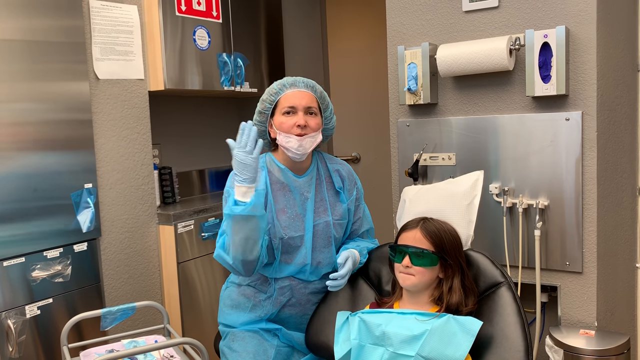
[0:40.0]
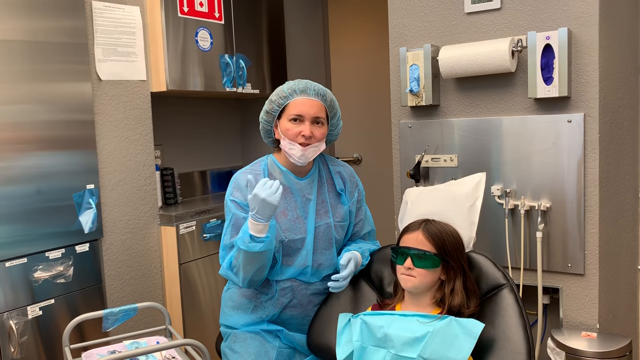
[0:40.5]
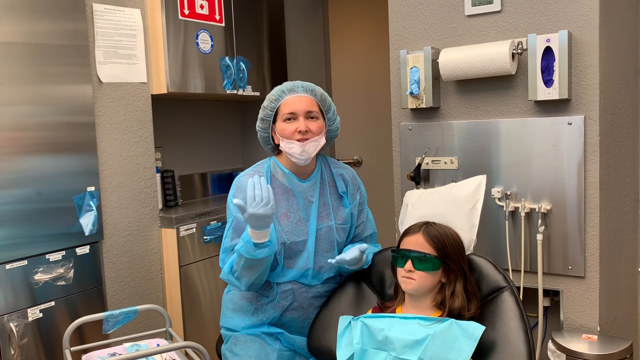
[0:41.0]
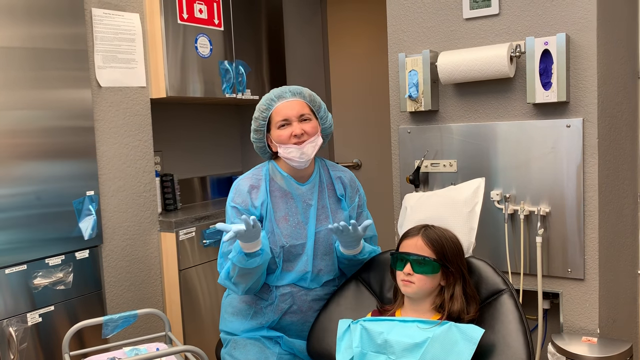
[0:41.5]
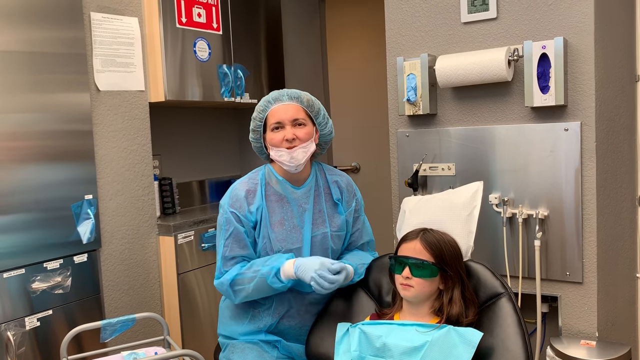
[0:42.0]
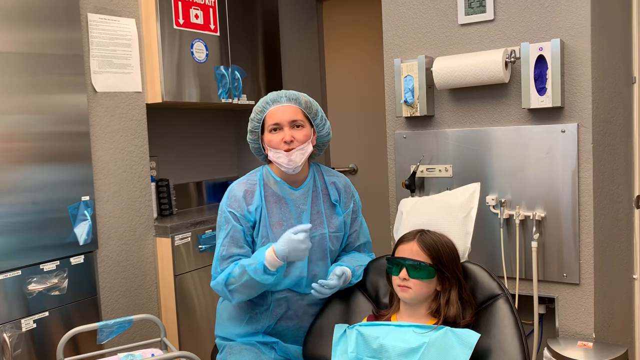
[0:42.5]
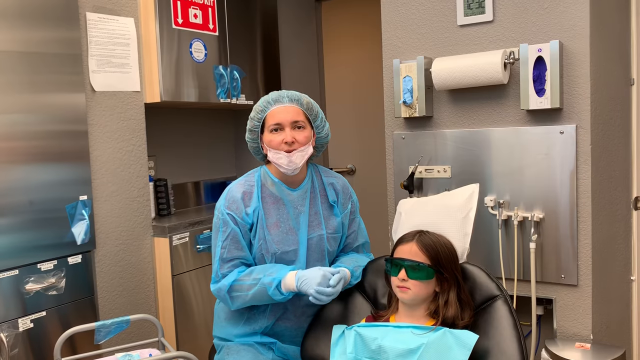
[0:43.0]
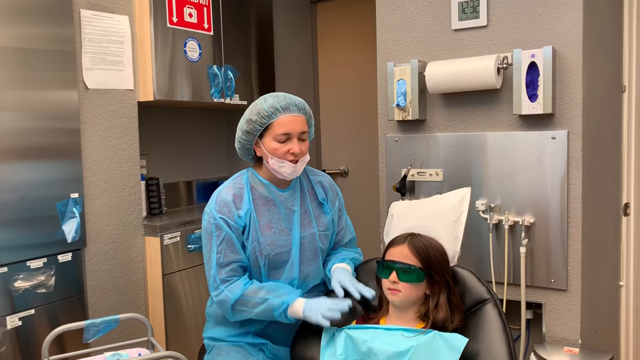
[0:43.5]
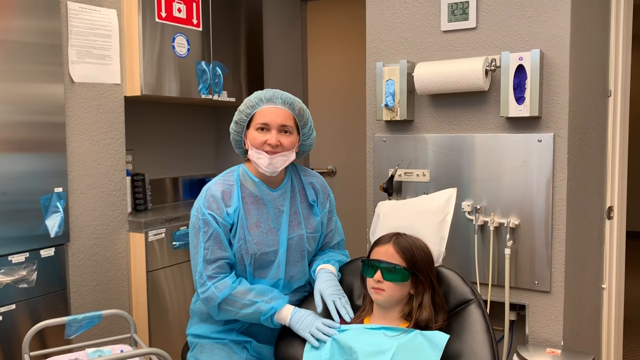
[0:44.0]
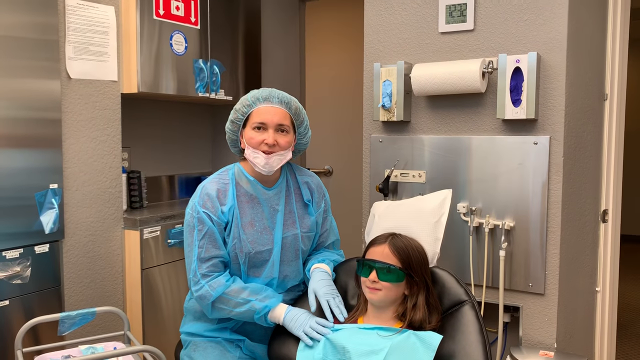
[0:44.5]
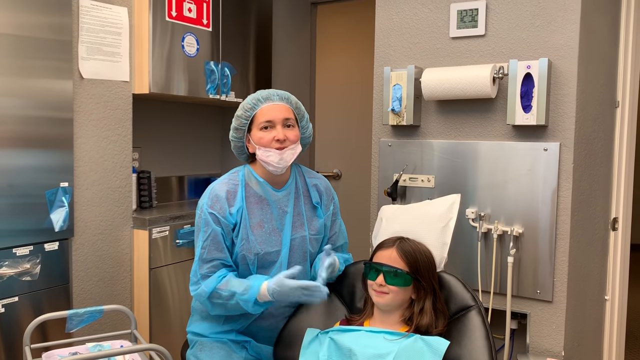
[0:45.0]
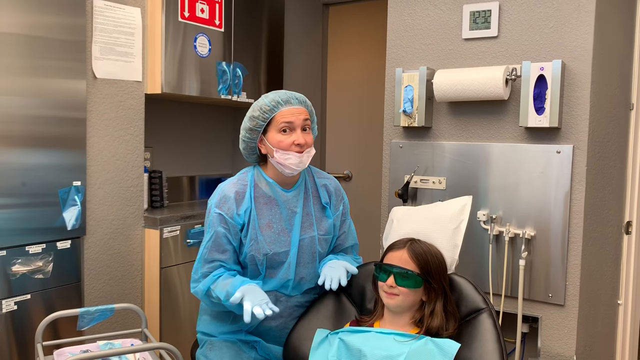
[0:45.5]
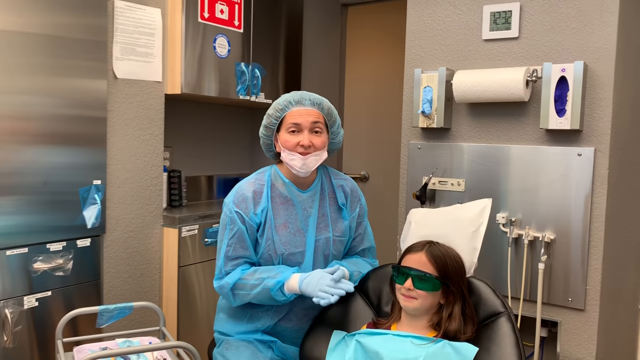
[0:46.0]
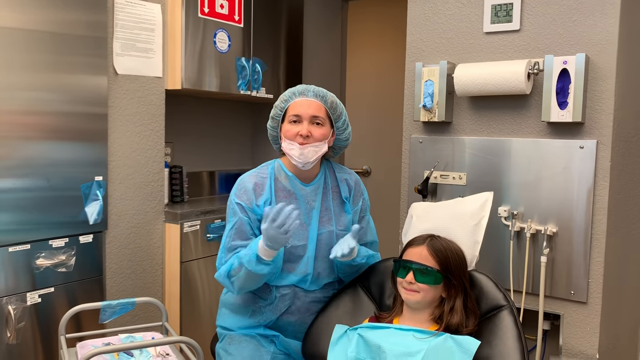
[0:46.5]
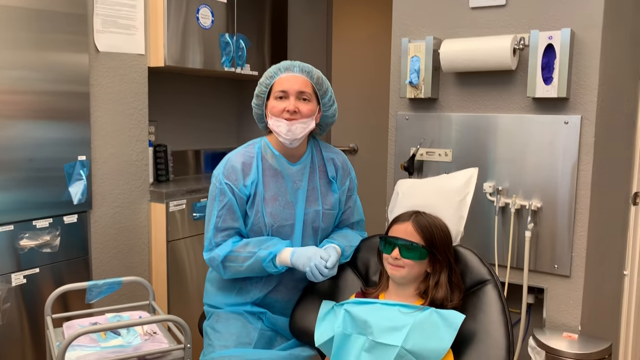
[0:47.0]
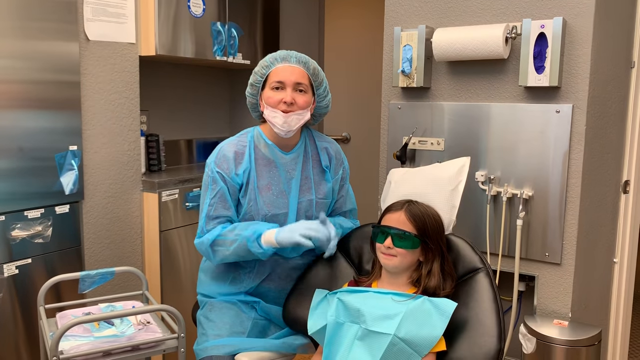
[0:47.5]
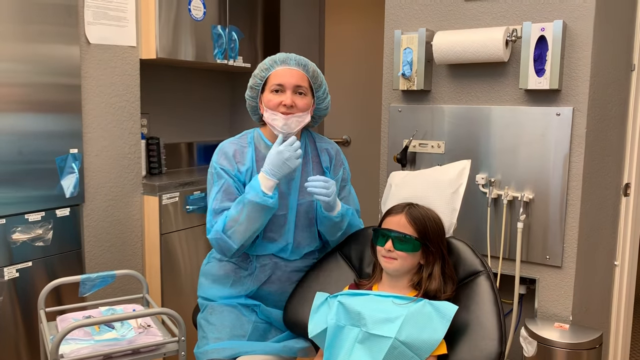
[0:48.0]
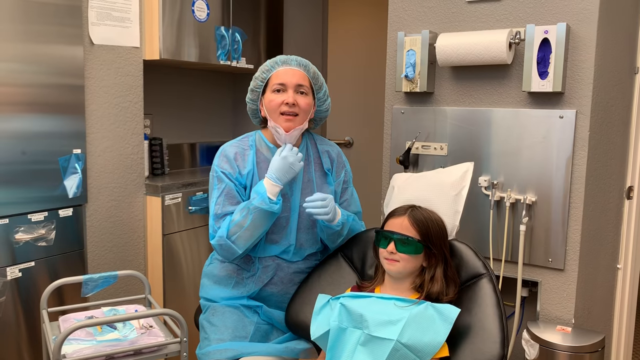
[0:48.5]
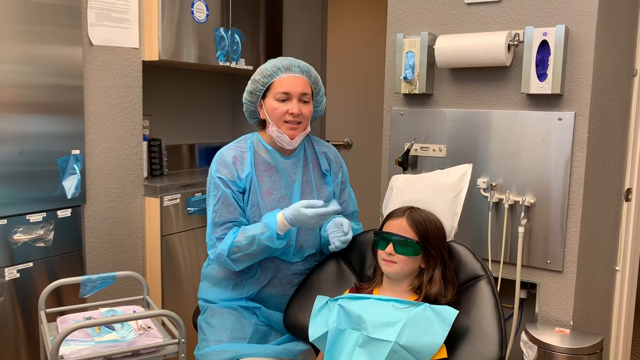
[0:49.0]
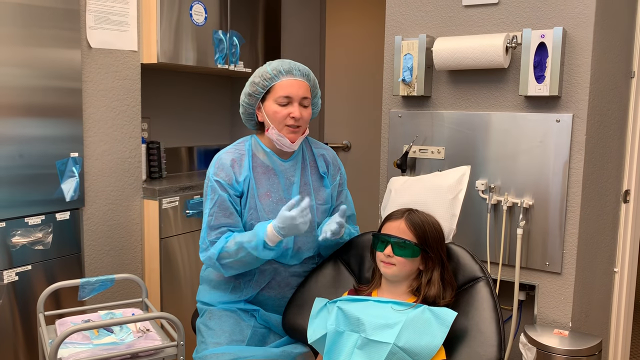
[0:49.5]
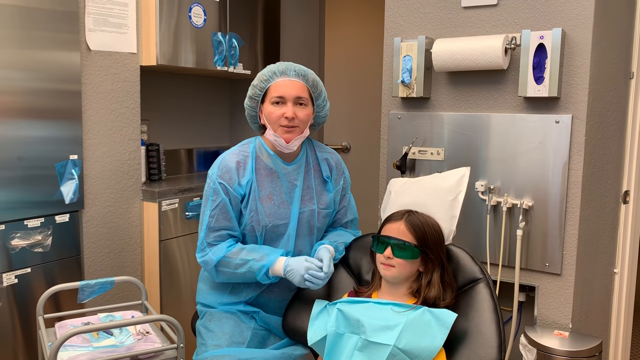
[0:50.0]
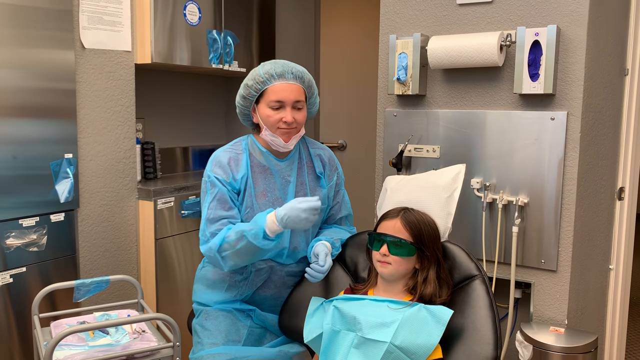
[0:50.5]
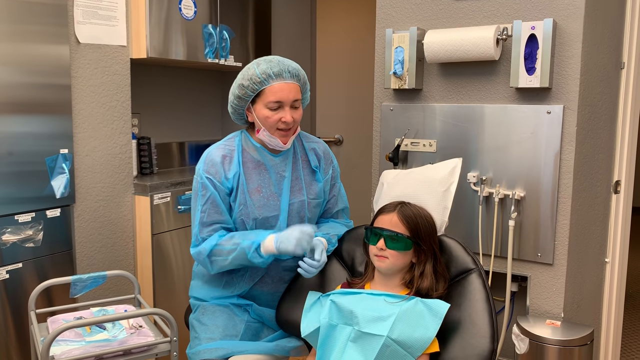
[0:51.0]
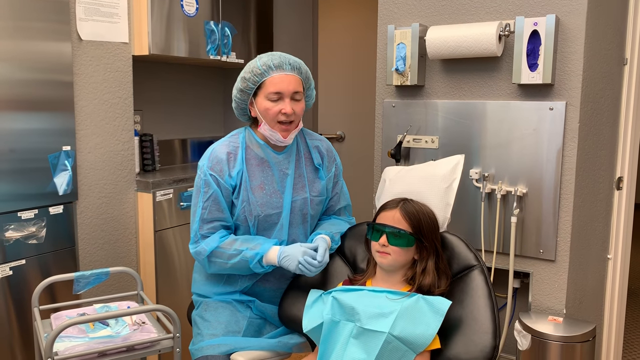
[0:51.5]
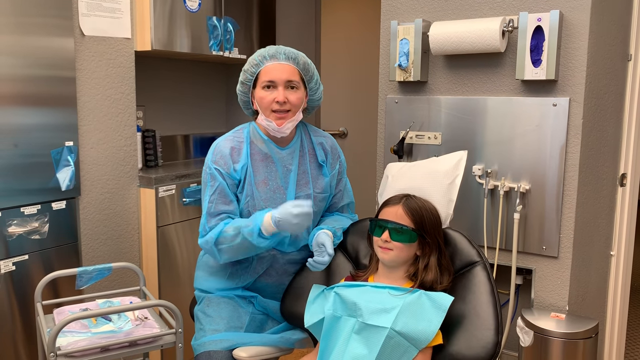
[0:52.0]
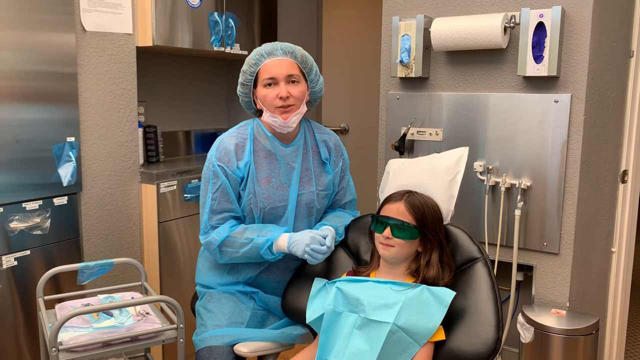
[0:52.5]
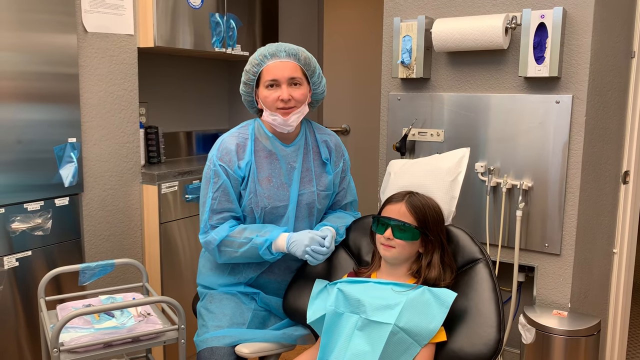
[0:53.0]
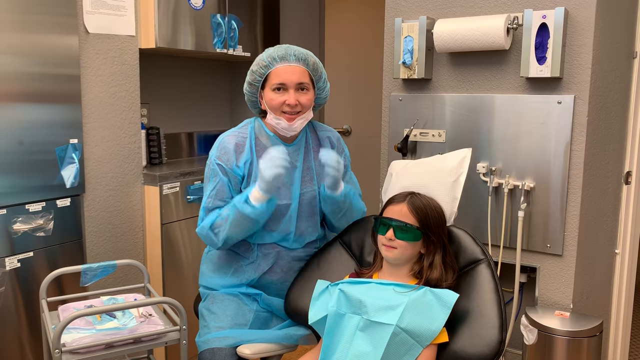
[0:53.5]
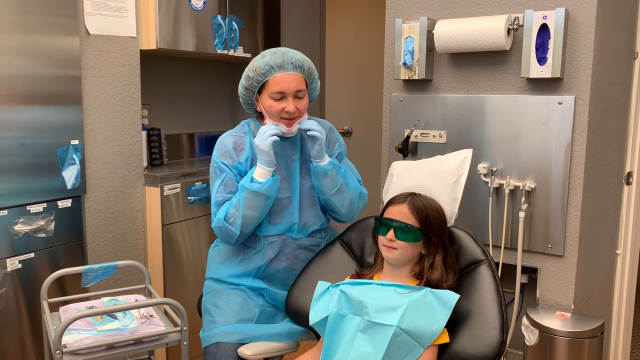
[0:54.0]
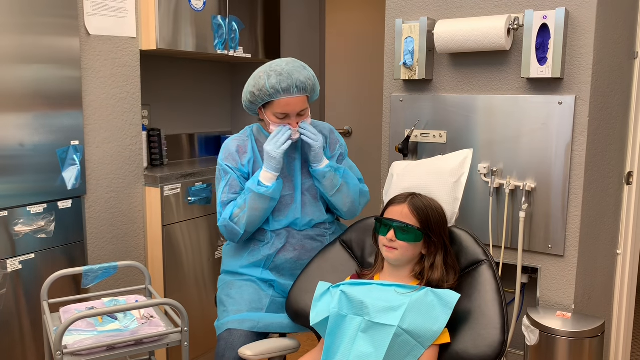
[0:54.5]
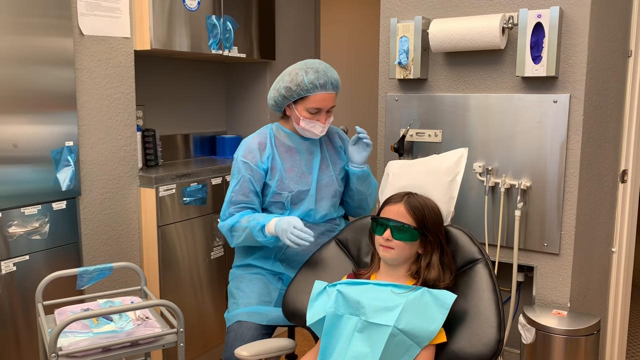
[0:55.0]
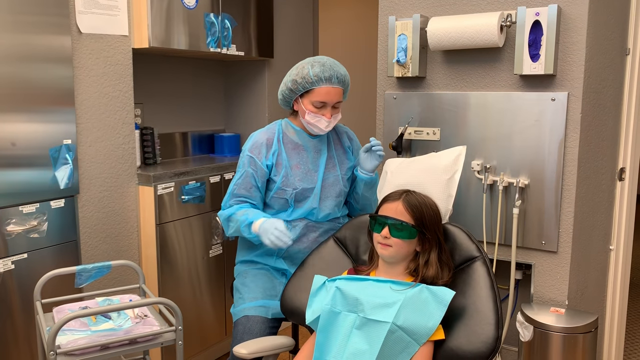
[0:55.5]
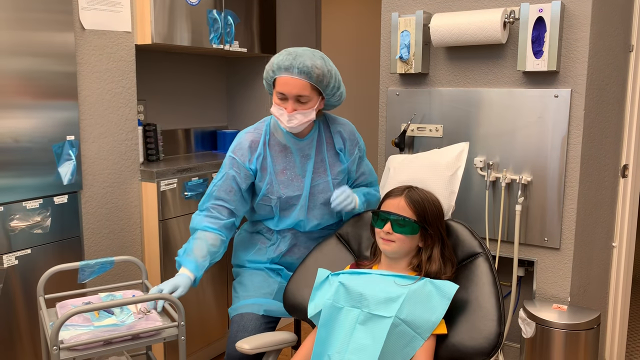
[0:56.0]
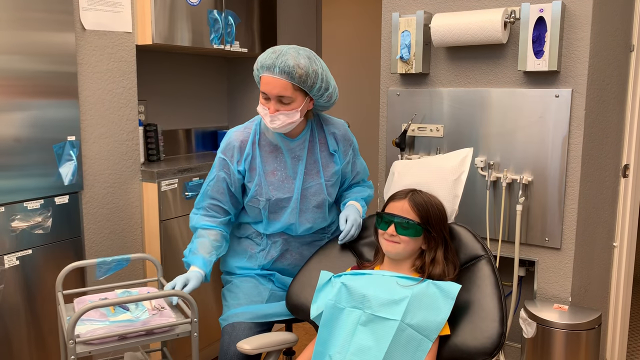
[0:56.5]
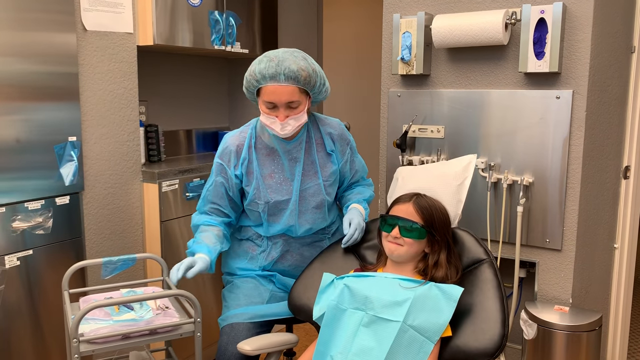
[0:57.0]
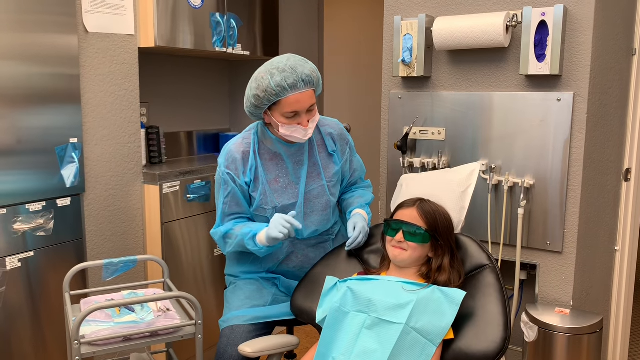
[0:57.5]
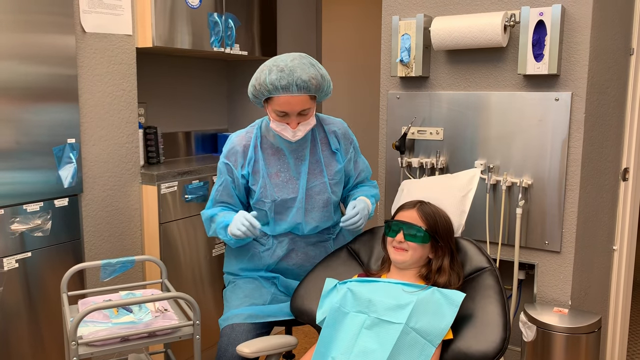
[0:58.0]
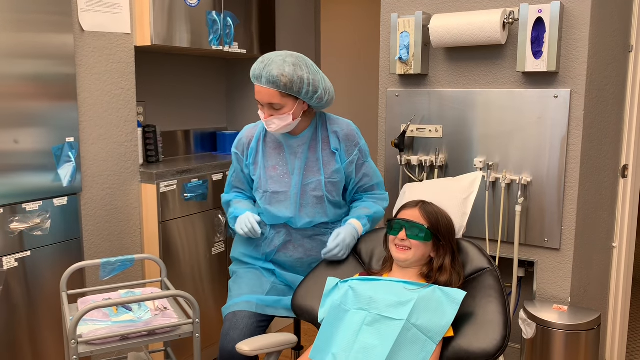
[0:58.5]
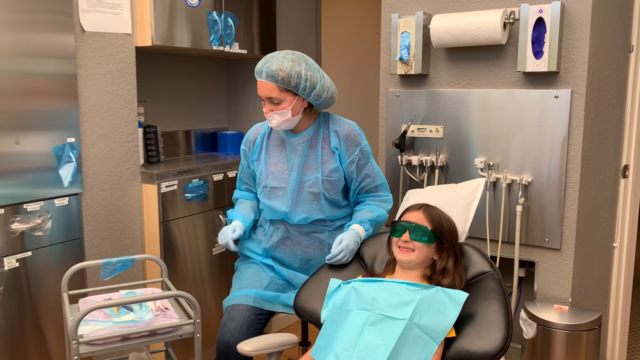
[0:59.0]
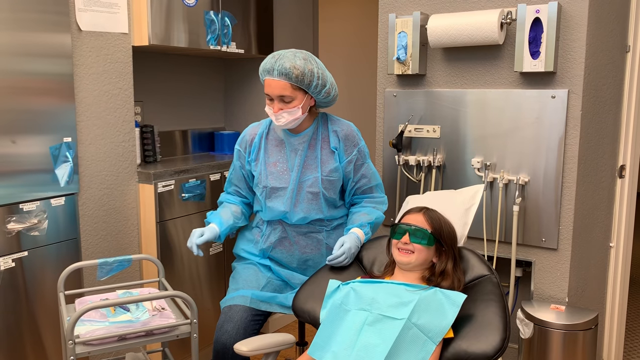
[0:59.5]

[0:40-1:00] The dentist continues talking and gesturing while looking at the camera. She places her hands on the little girl's right shoulder, and the girl looks at the camera. The dentist keeps putting her hands together as she talks, moving them around in gestures and then putting them together again. She then puts her face mask back on and rolls back the chair she was sitting on. The little girl's chair descends and reclines backwards, and the girl smiles very nervously as it reclines. A digital wall clock hangs on the wall in the top right corner, showing the time 12:32.